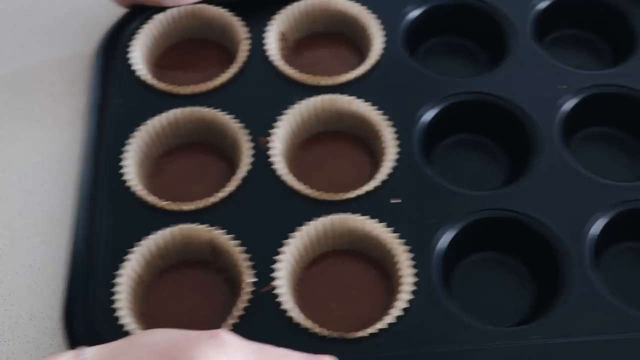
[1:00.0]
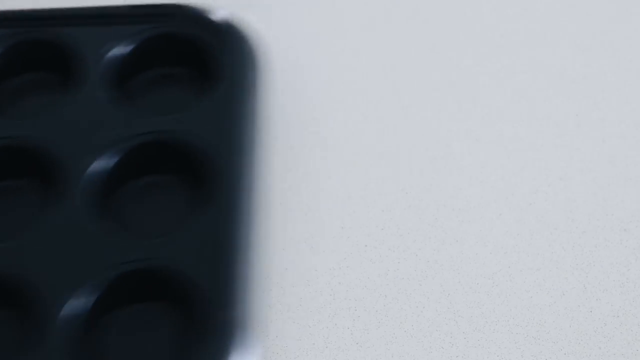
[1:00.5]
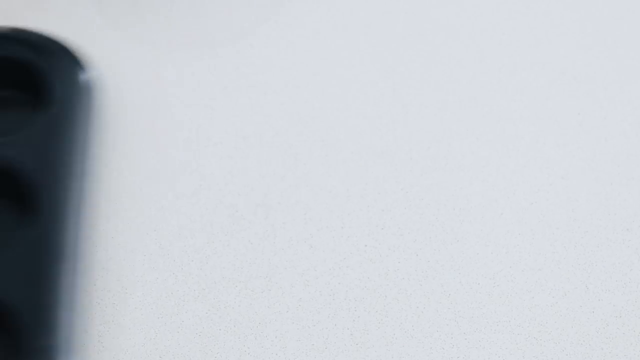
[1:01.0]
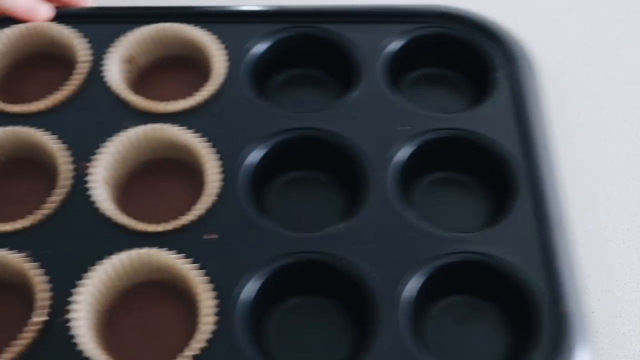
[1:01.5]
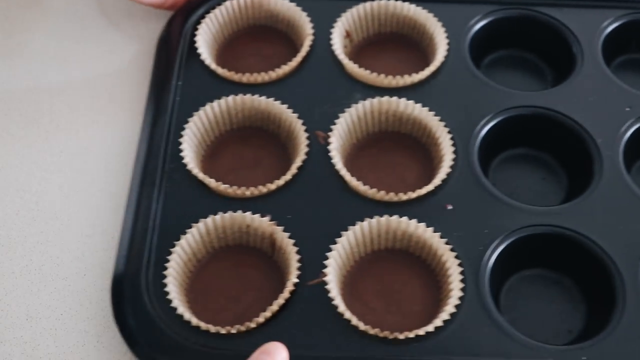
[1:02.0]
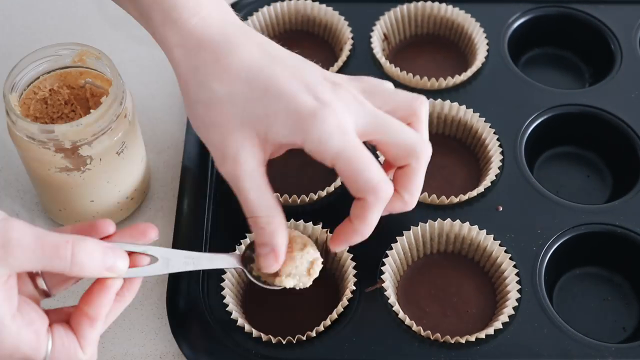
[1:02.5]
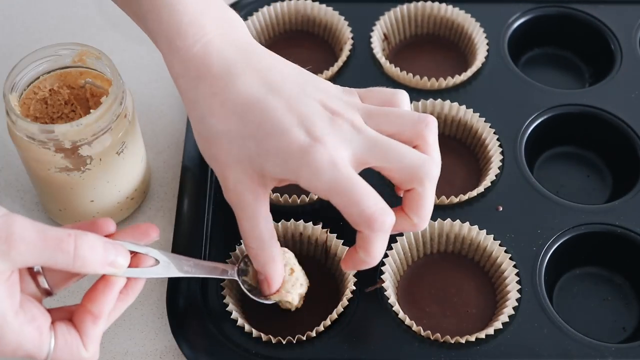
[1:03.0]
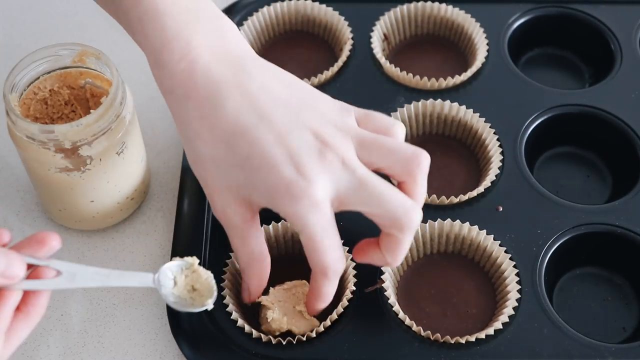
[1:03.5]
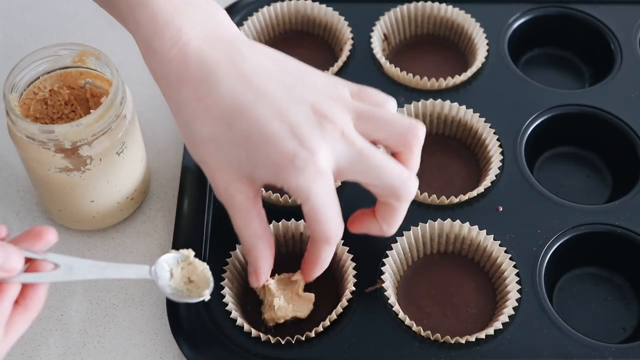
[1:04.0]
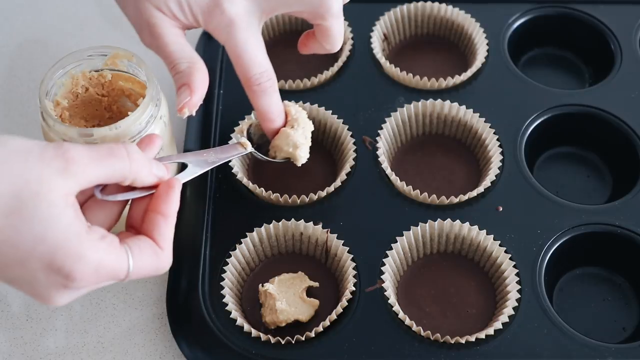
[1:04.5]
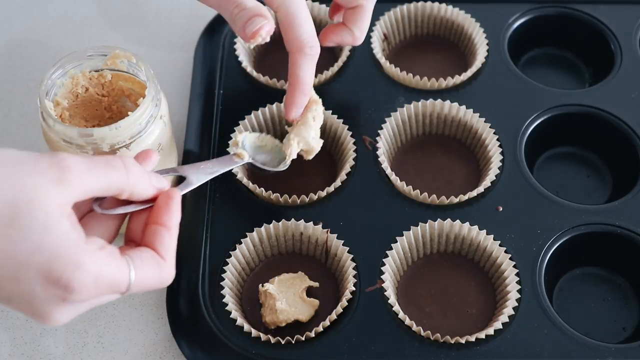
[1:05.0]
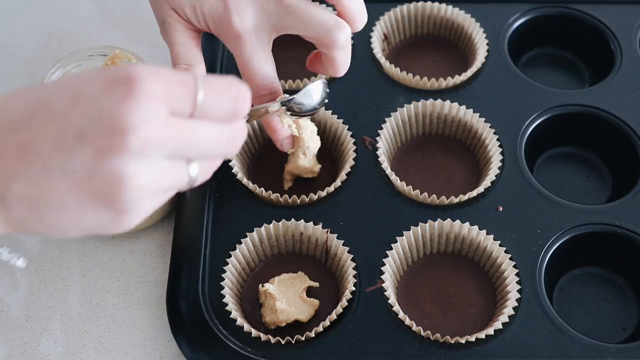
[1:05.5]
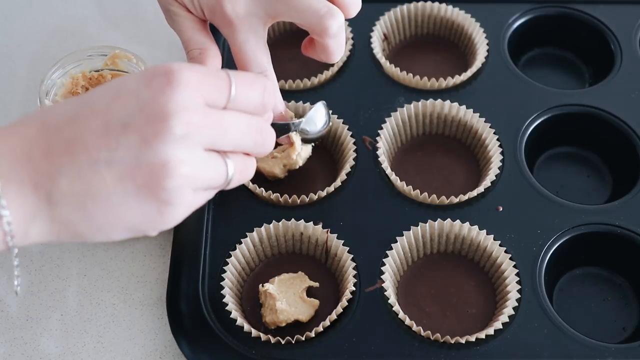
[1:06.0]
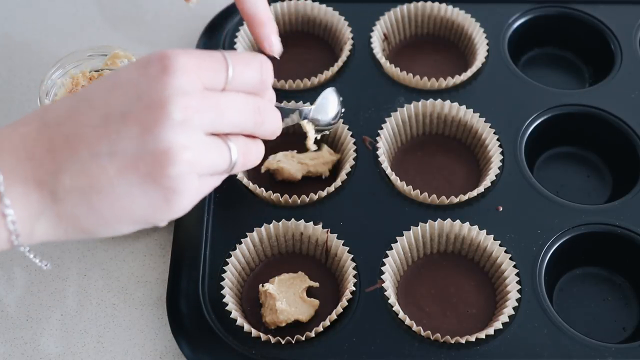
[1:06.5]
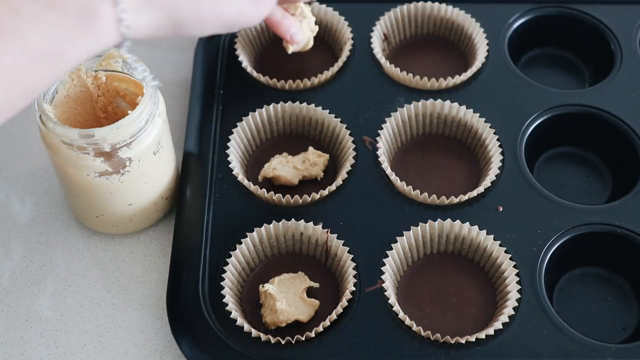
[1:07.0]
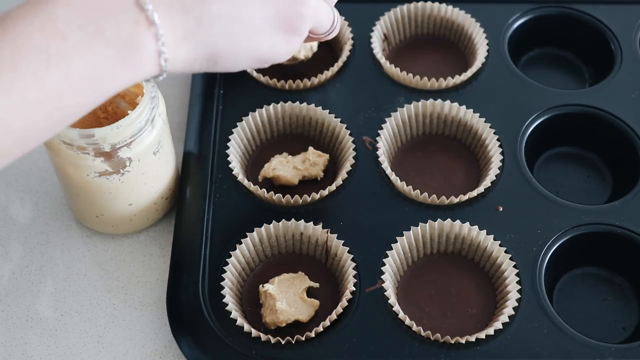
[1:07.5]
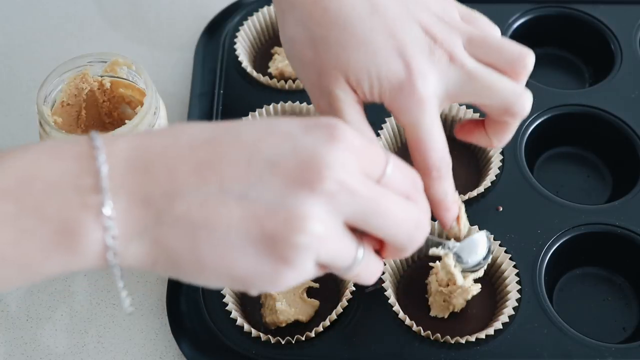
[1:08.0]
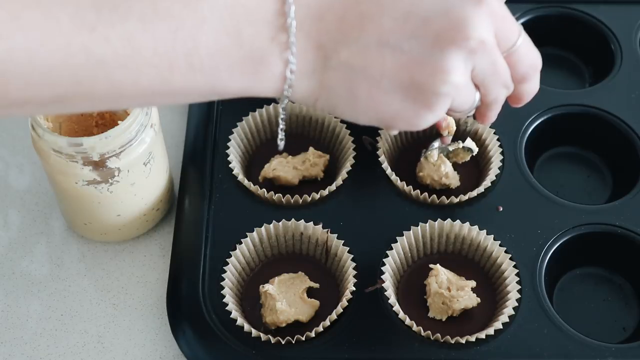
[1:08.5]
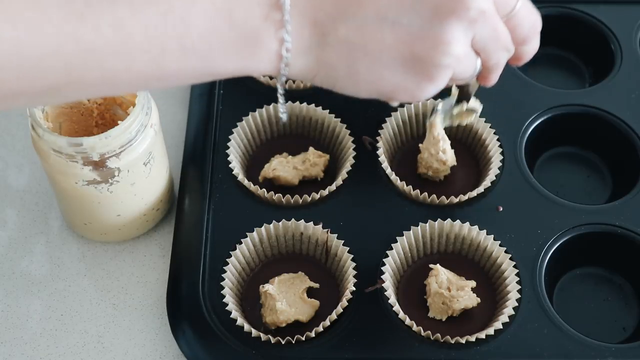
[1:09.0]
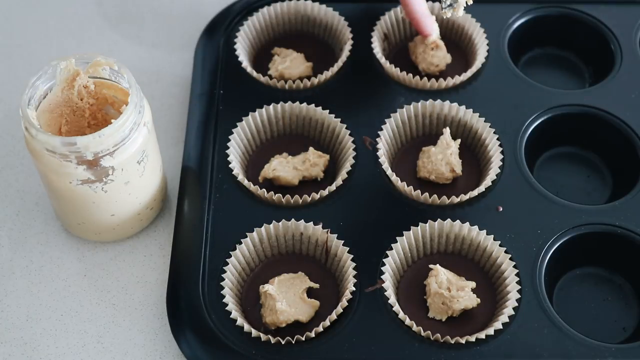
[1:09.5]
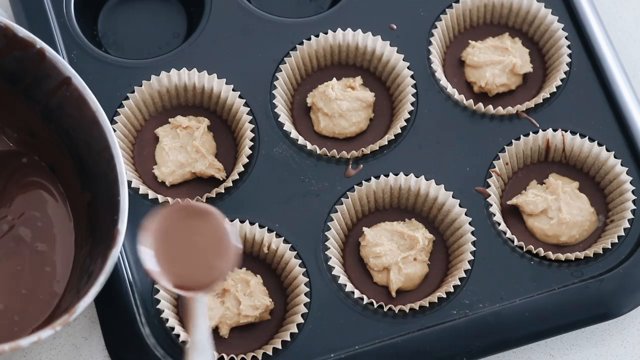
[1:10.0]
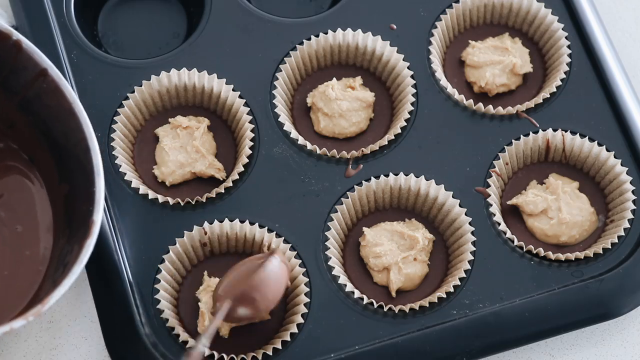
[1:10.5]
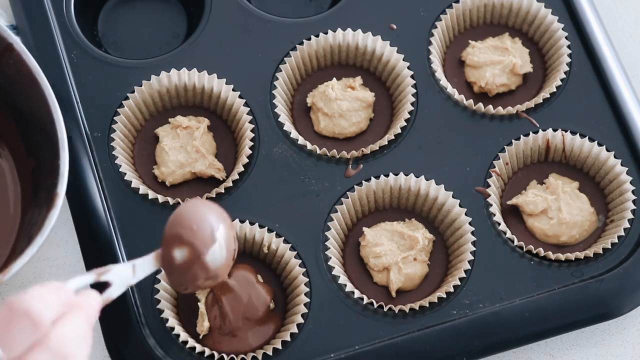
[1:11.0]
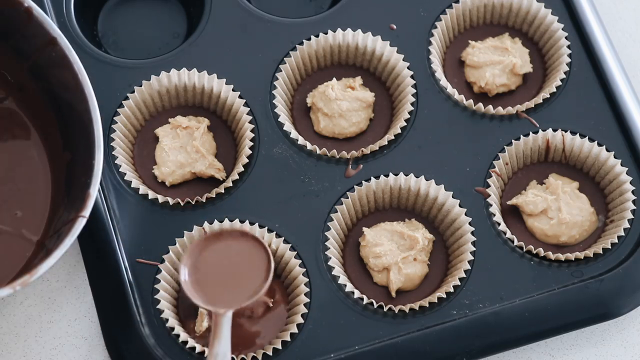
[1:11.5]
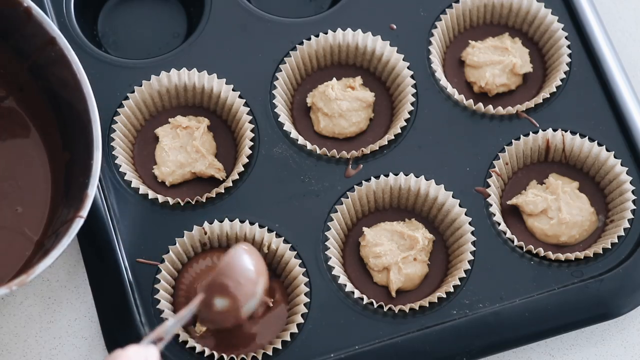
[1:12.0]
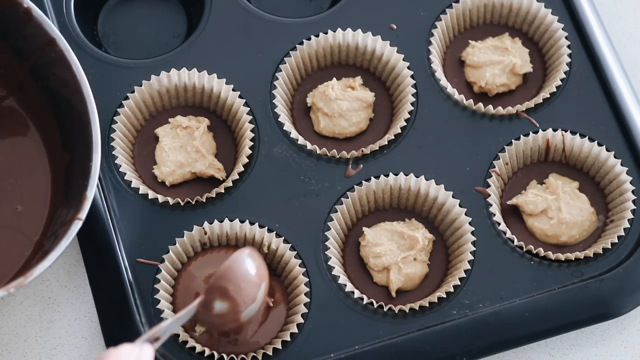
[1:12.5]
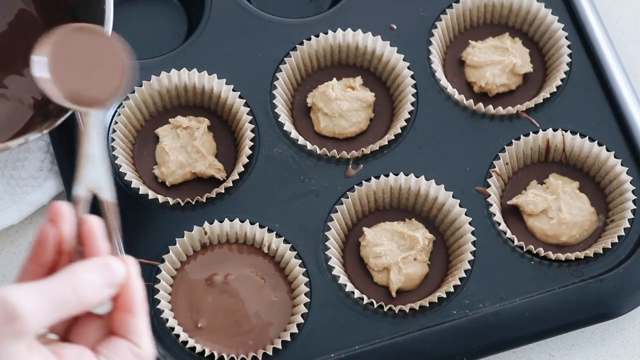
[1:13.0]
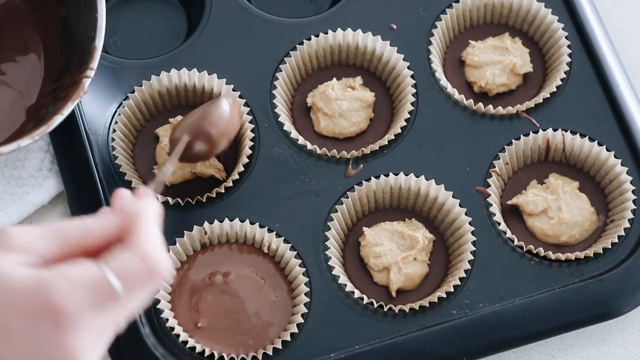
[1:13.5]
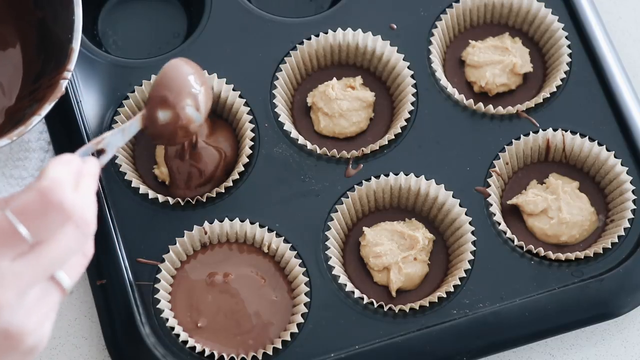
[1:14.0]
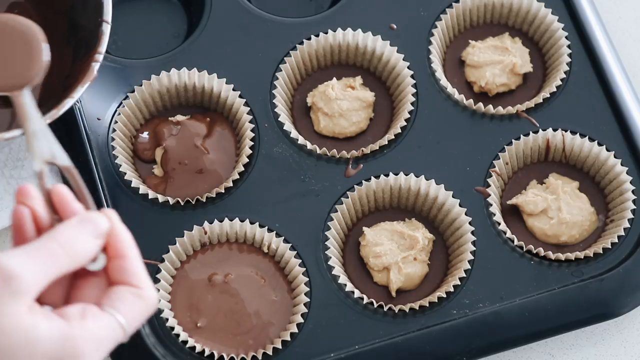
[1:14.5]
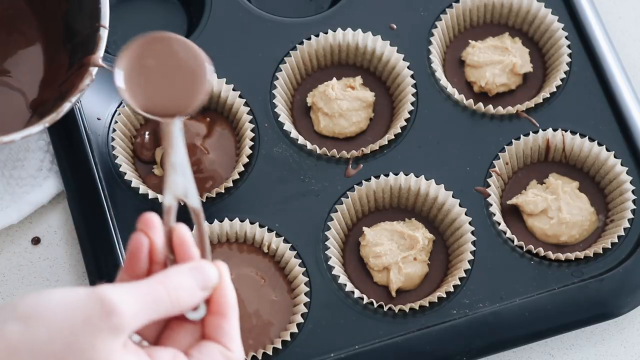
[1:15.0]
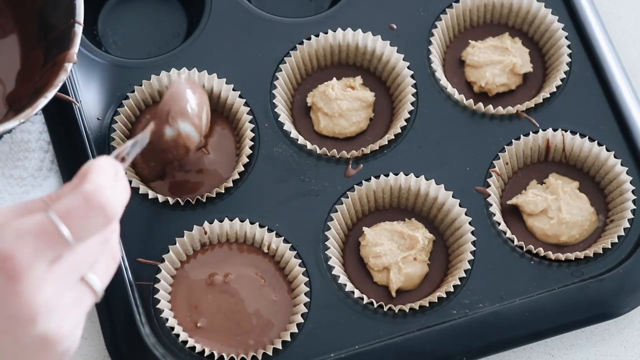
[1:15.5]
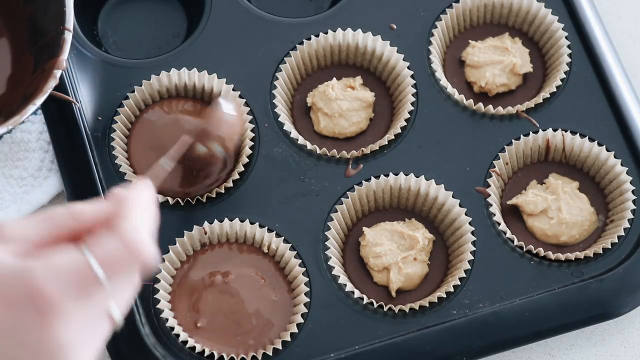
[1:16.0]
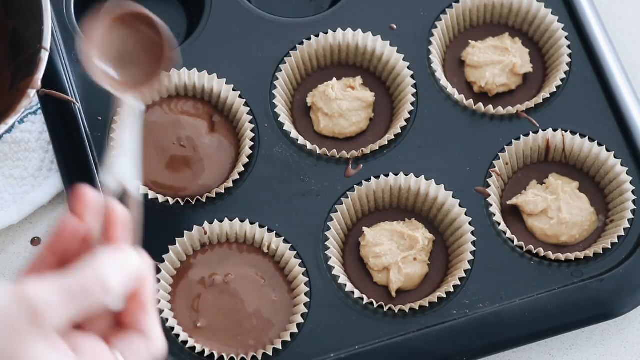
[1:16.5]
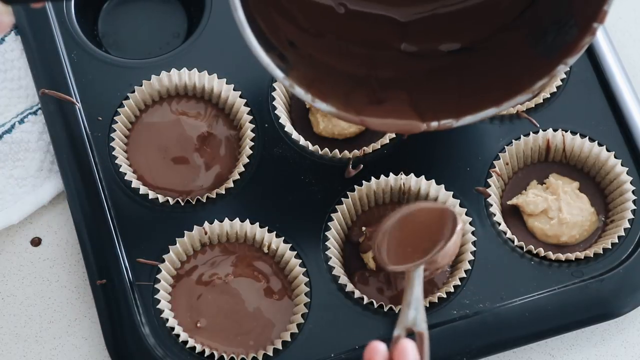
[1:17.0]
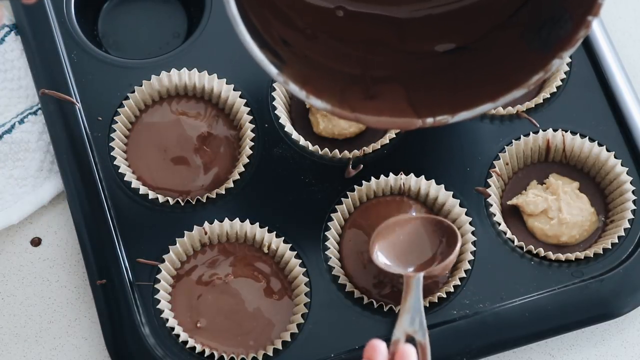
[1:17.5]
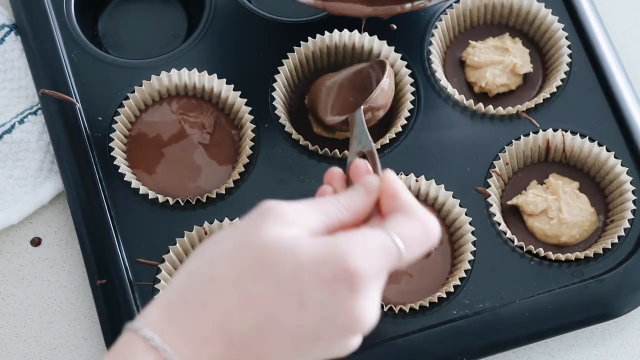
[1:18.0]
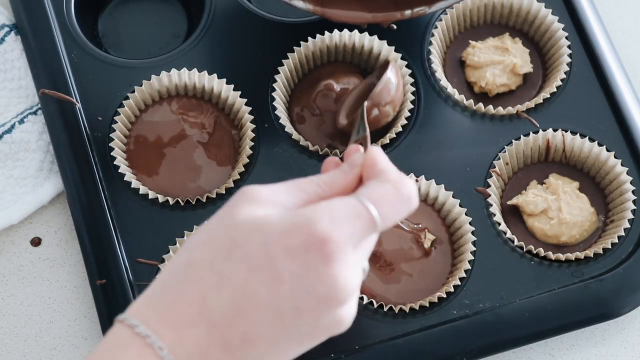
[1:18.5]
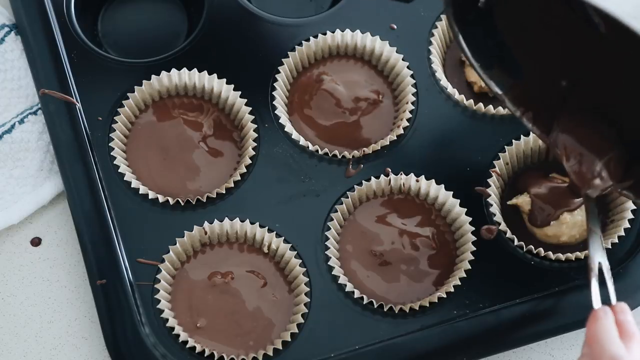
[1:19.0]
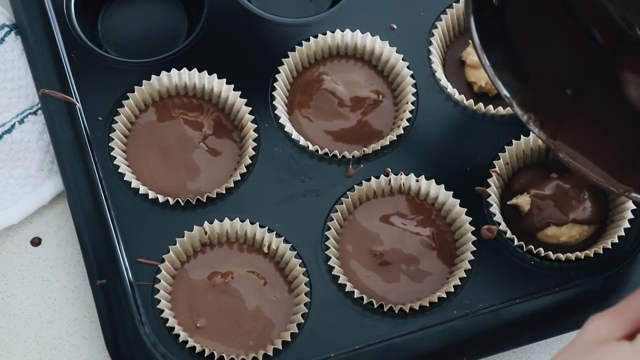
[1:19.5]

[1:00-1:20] A cupcake pan holds six chocolate candies being made, with melted chocolate in the cupcake wrappers on the left side. The shot changes to the white teenage female using her fingers to put peanut butter into the center of the chocolate at the bottom of the cupcake wrappers, until all six have peanut butter. Holding the saucepan in her left hand, she uses a deep chrome spoon to dip chocolate out of it and cover the peanut butter in the center. She covers all six candies to the top so no peanut butter is visible and the top is smooth, creamy chocolate. She scrapes all of the chocolate out of the pan into the cups for an even amount.